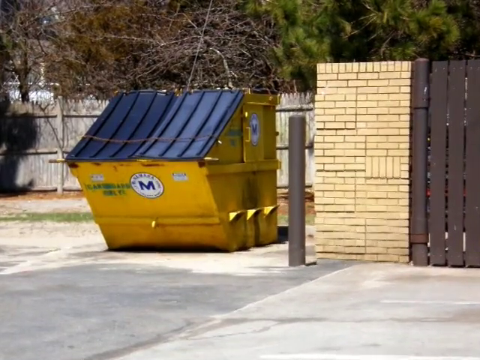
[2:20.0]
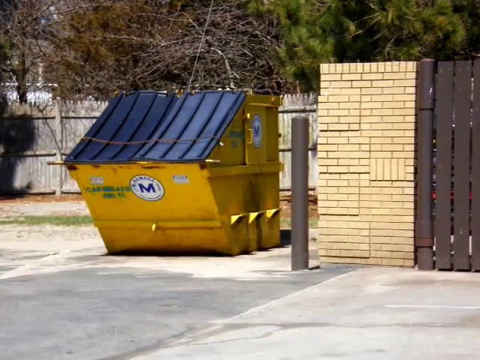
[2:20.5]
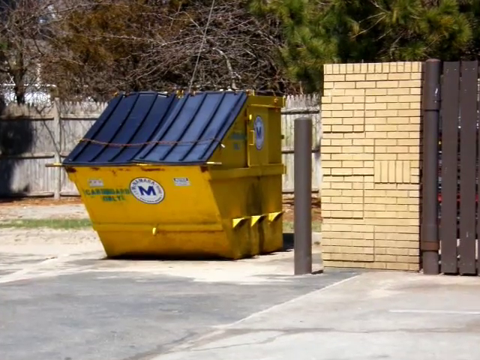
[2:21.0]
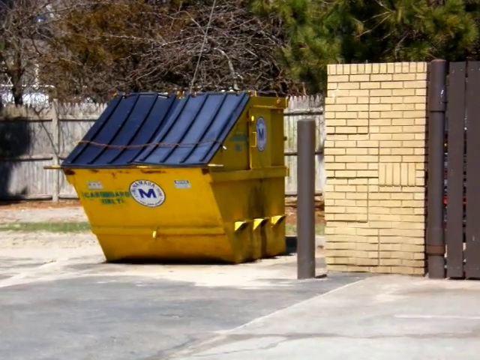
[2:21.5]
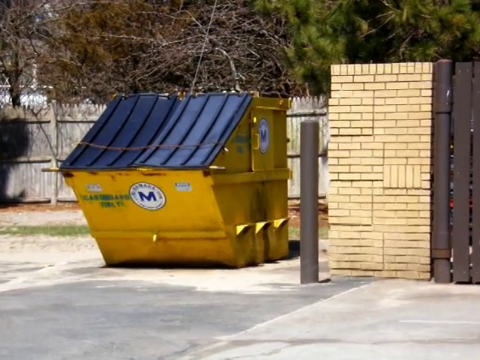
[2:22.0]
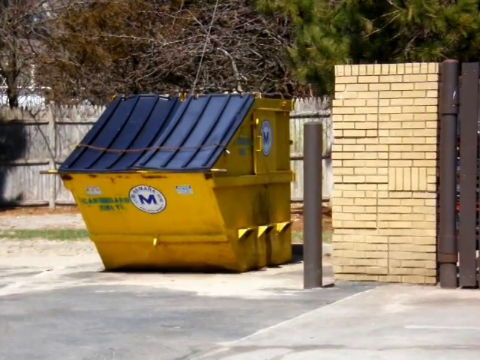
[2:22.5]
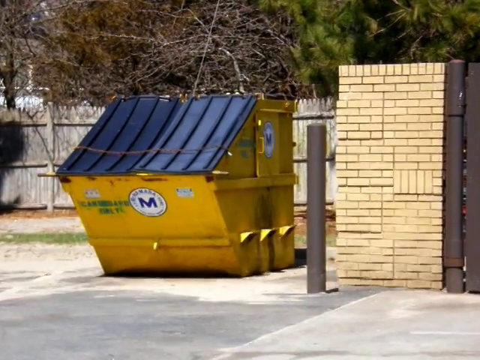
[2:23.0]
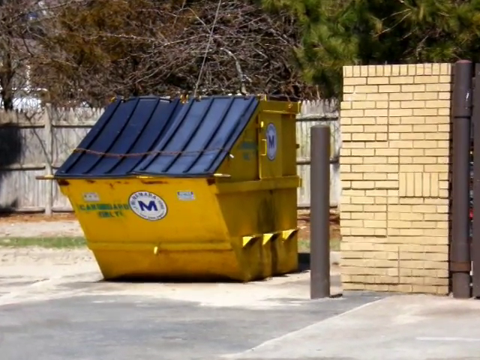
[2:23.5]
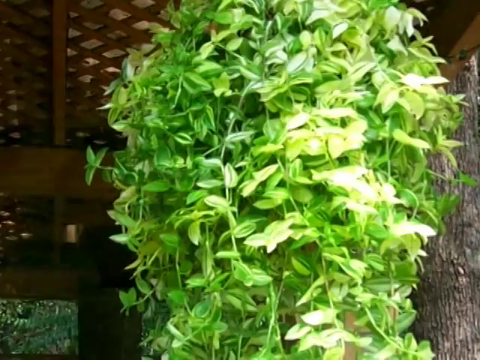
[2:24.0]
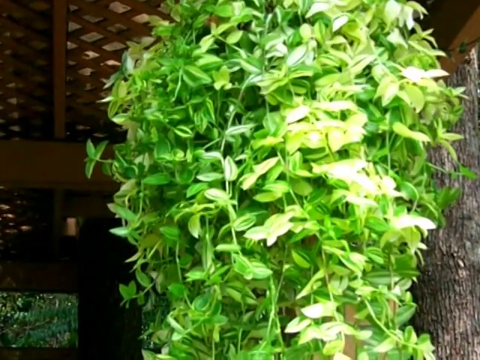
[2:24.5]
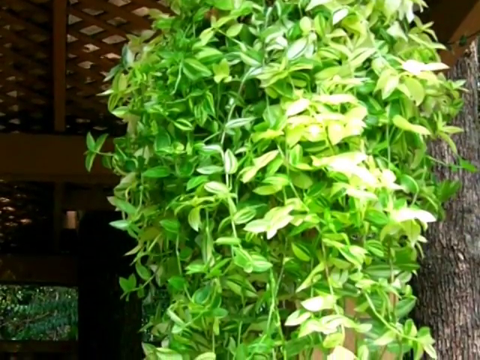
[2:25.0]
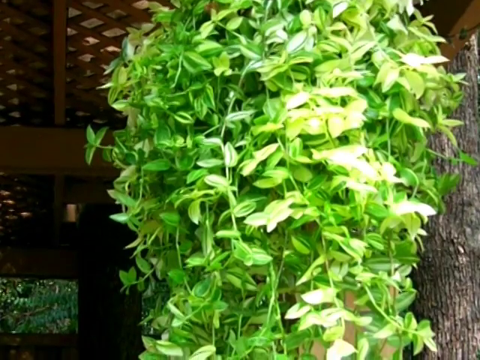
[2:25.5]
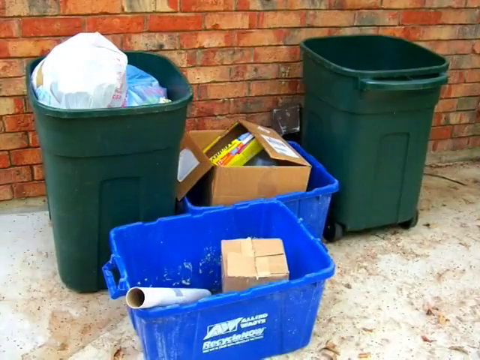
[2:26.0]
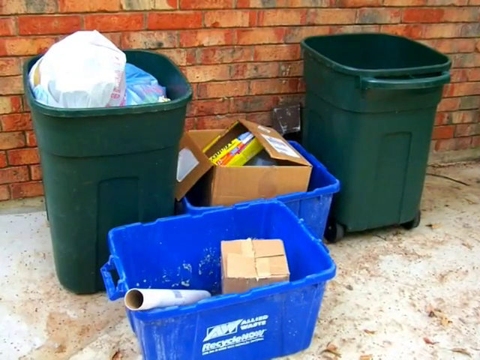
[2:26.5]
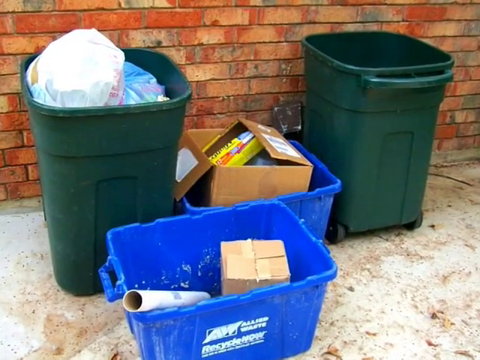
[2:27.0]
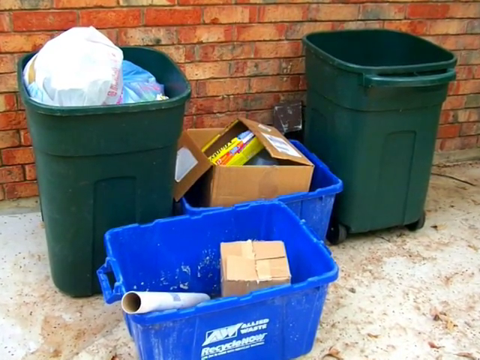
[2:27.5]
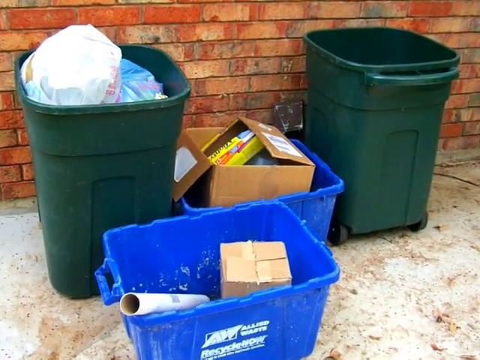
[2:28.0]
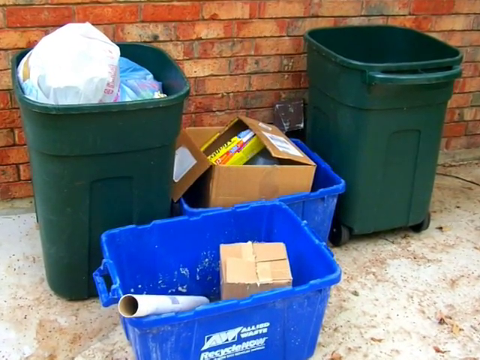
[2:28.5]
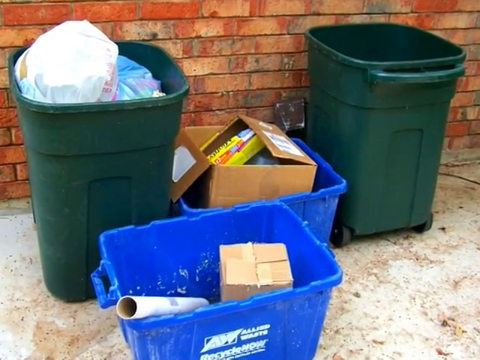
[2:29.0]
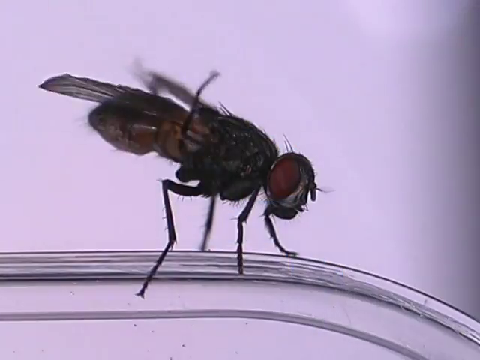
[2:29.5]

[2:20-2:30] A series of images is shown. The first is a blue and yellow garbage dumpster that appears to be in a parking lot next to a small bricked-in area with a gate in front of it. The image changes to a close-up of a plant, then quickly to two open garbage cans and two recycling bins. The garbage can on the left is filled with garbage bags, and the one on the right is empty. A recycling bin between the garbage cans has a large box in it, and another recycling bin directly in front of it holds a smaller box and a cardboard tube. Then a close-up filmed from the side shows a fly perched on something, its wings moving.